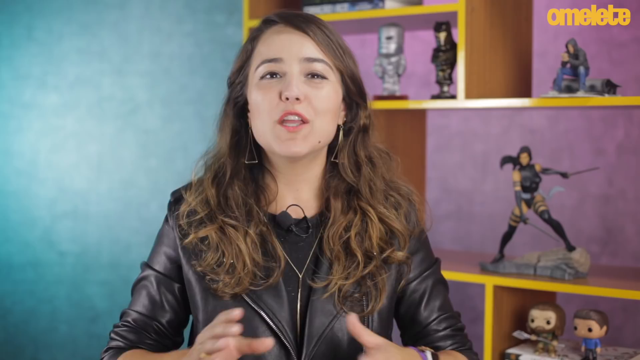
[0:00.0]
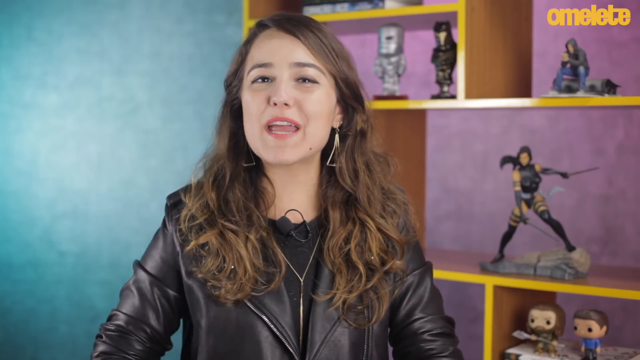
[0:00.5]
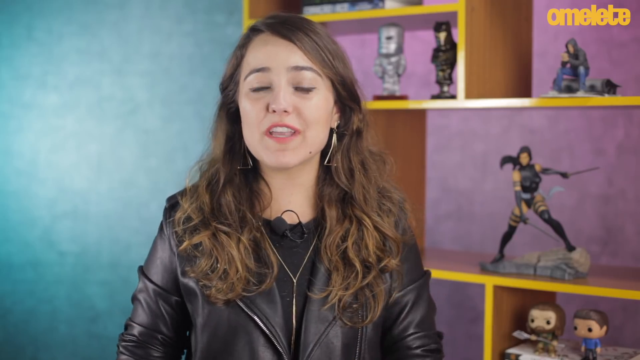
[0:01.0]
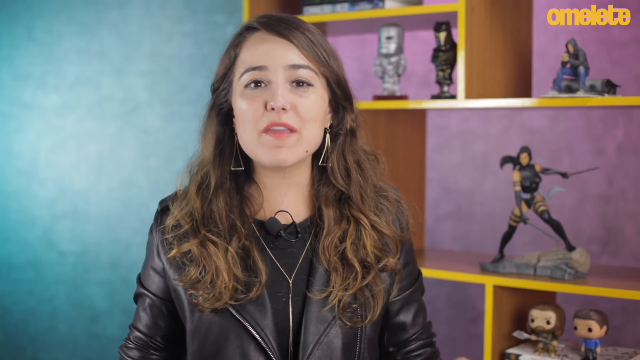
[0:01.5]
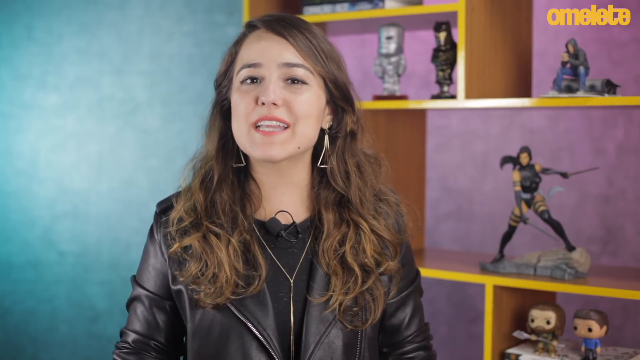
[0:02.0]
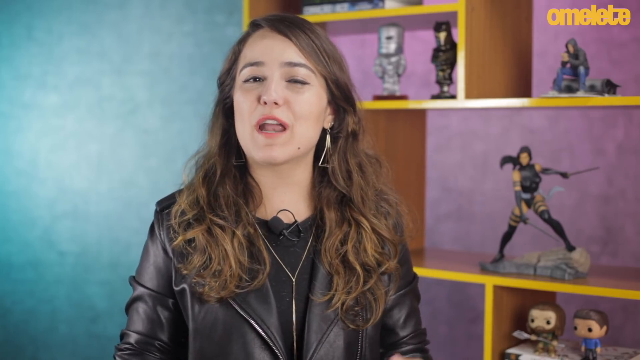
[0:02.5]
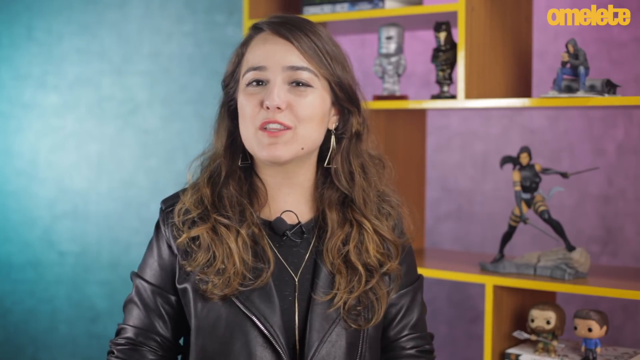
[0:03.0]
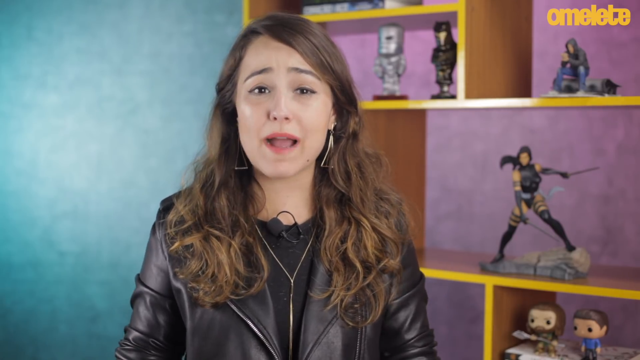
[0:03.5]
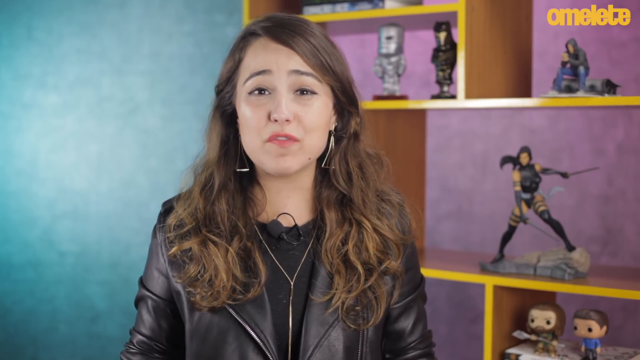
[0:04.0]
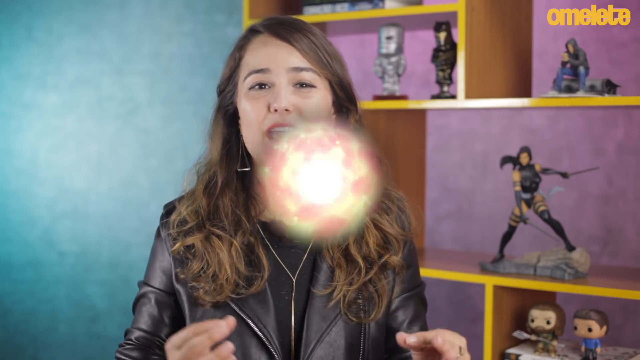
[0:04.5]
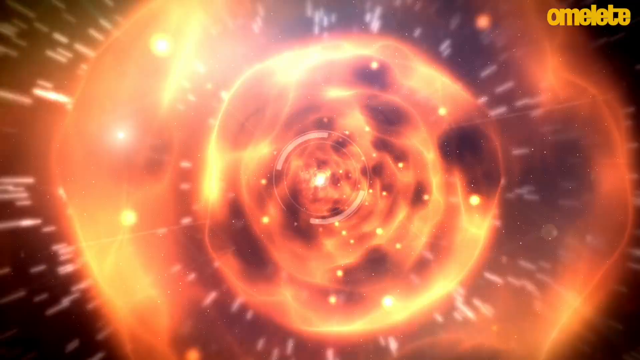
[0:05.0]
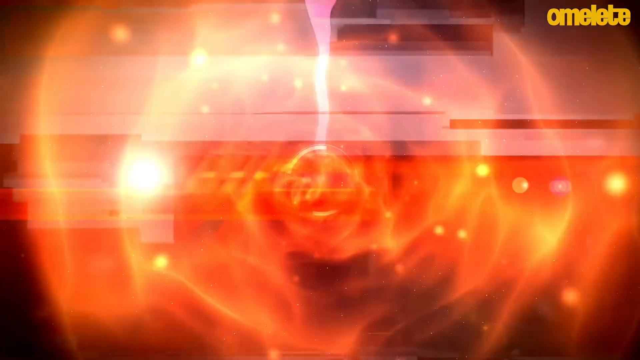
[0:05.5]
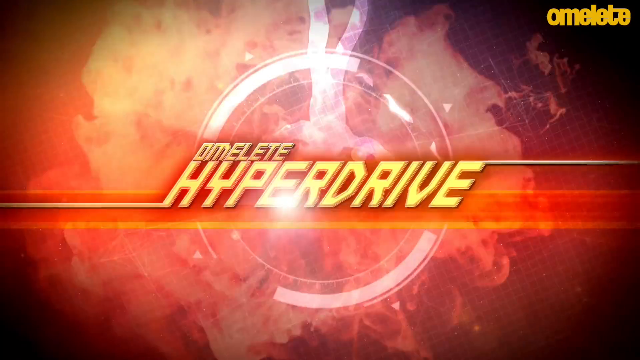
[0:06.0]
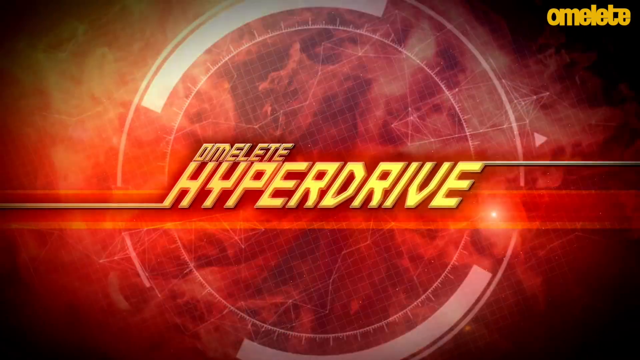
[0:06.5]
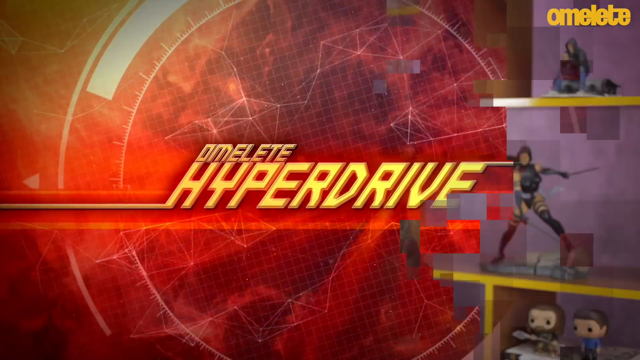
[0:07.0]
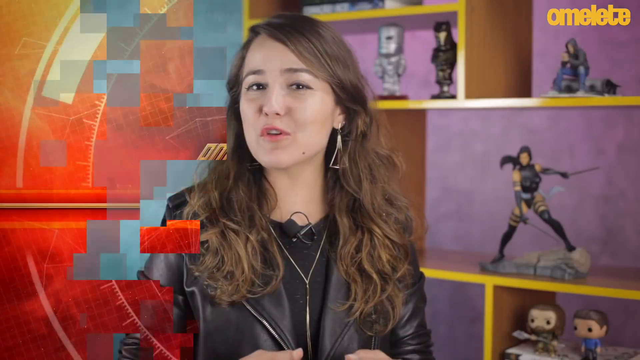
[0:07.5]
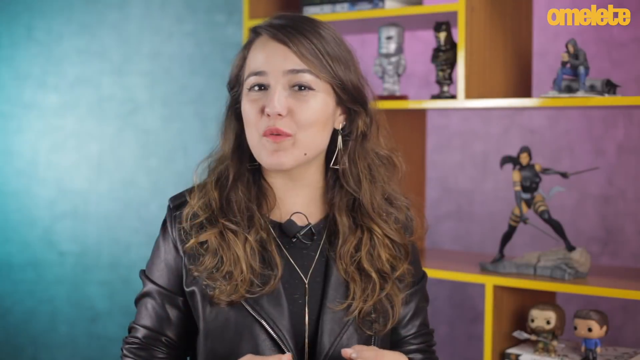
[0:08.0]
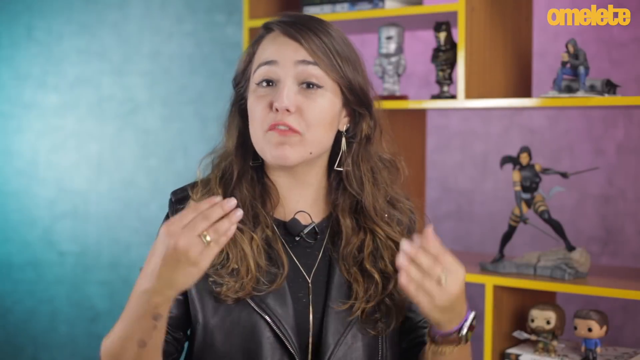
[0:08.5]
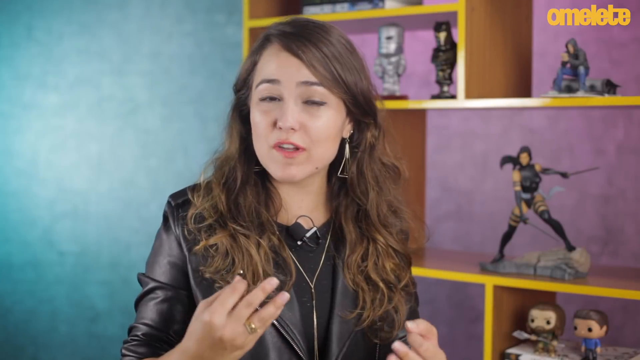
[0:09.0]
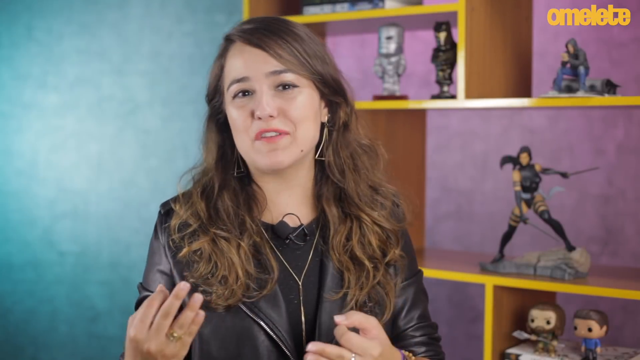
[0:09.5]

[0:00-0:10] A woman talks to the camera in front of what seems to be a cupboard holding animated characters of different character roles, with the text "omelette" in the top right corner. As she keeps talking, the video switches to a different background with the text "omelette hyperdrive", then switches back to her briefly. It seems to be a brief introduction, and she seems to be presenting the characters displayed behind her.